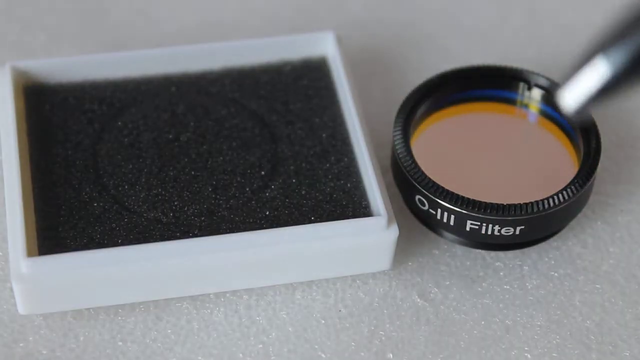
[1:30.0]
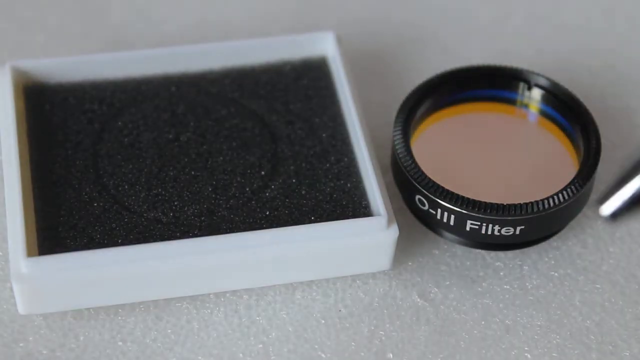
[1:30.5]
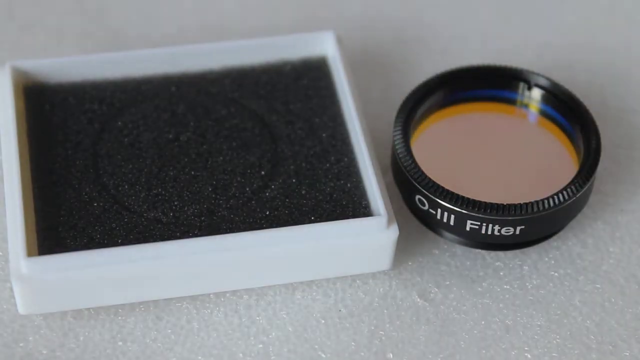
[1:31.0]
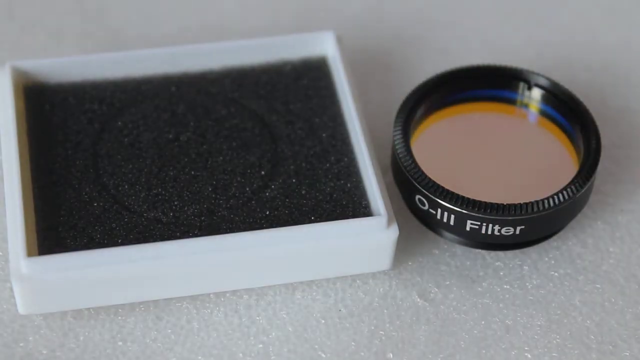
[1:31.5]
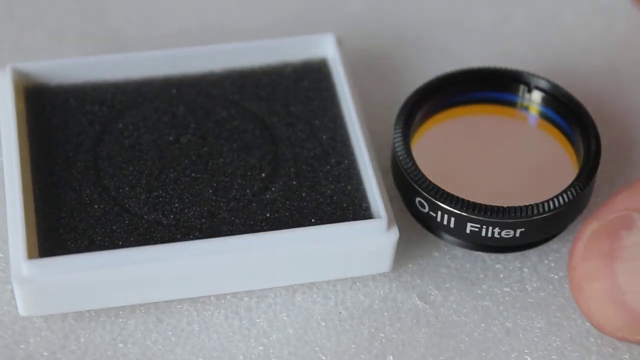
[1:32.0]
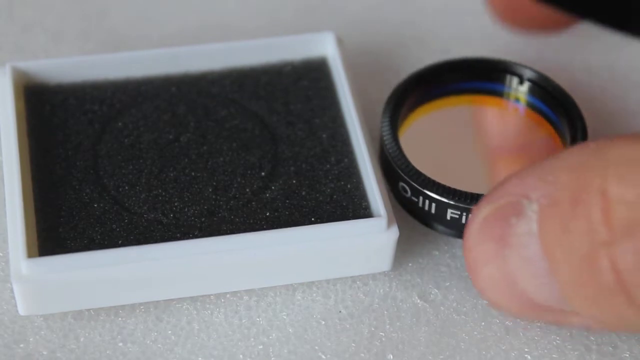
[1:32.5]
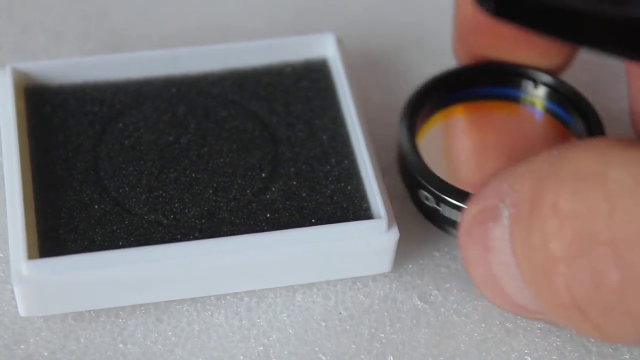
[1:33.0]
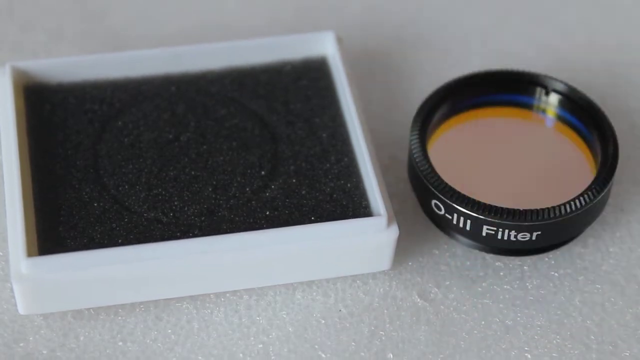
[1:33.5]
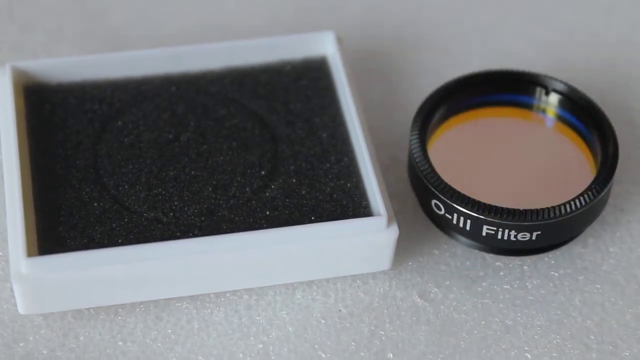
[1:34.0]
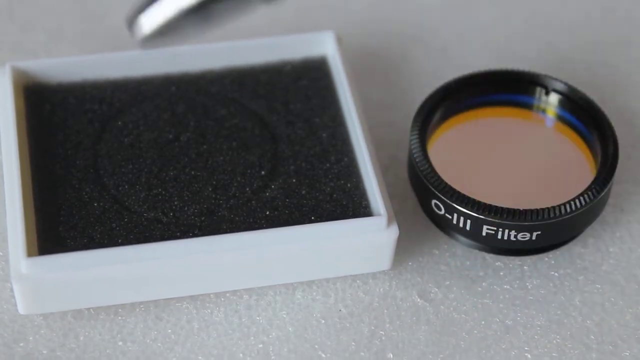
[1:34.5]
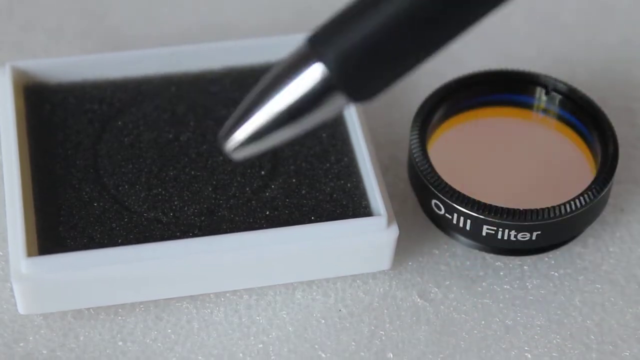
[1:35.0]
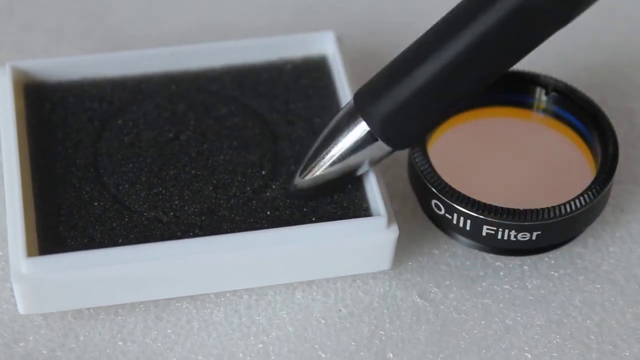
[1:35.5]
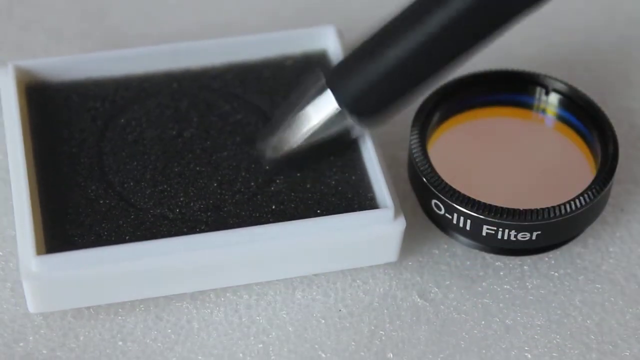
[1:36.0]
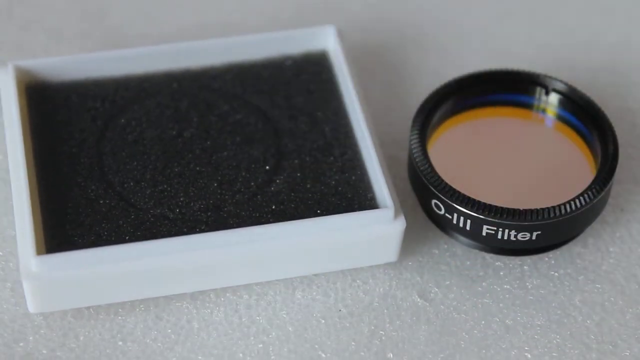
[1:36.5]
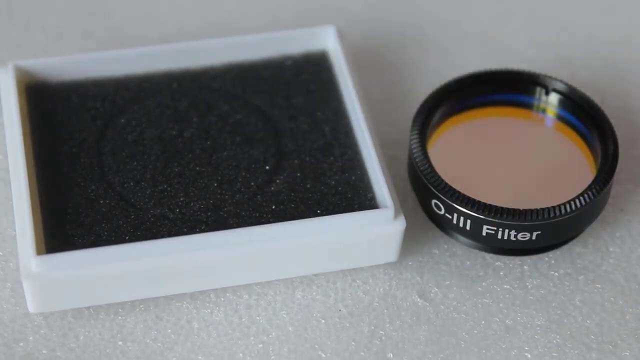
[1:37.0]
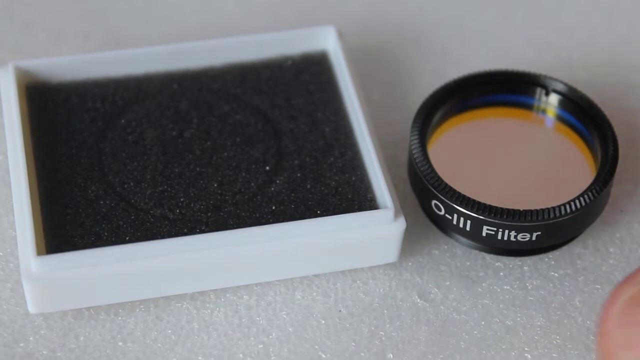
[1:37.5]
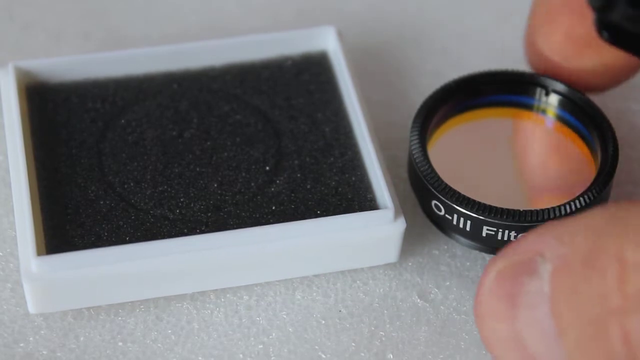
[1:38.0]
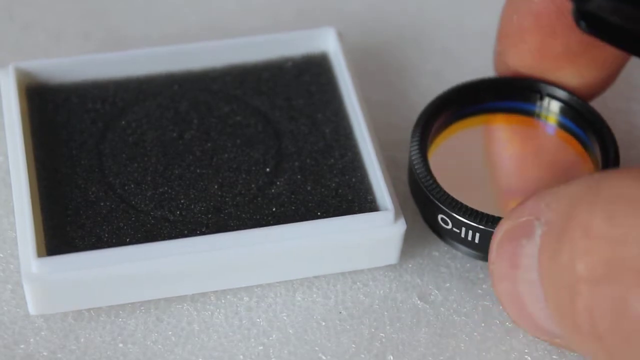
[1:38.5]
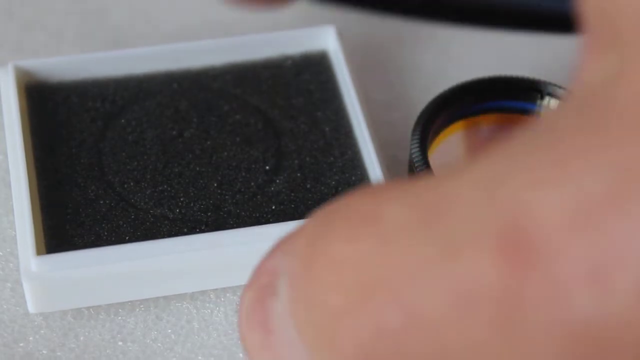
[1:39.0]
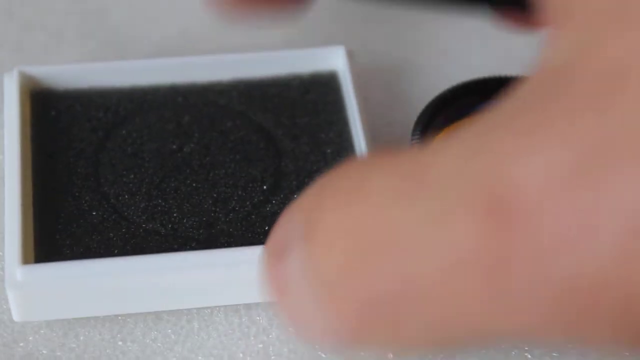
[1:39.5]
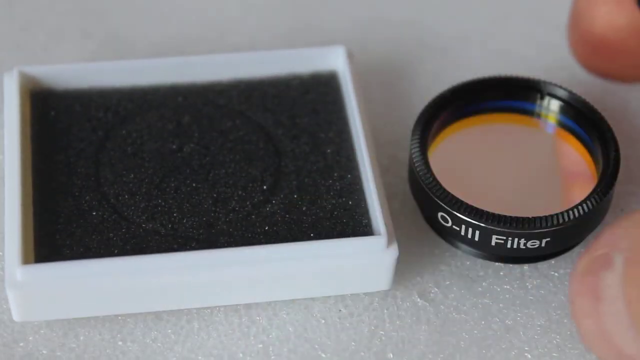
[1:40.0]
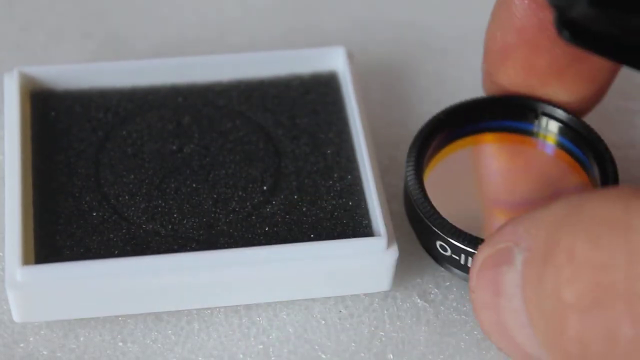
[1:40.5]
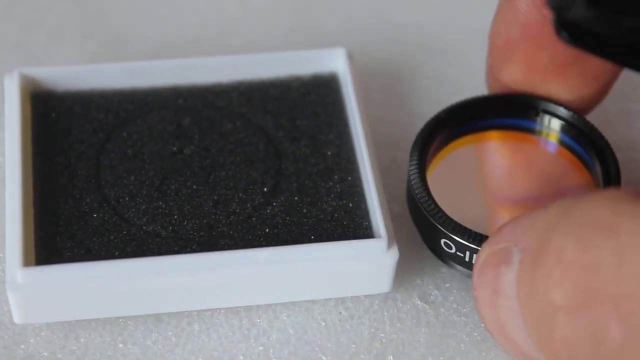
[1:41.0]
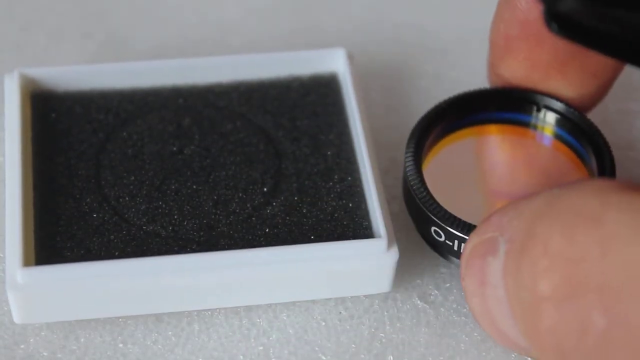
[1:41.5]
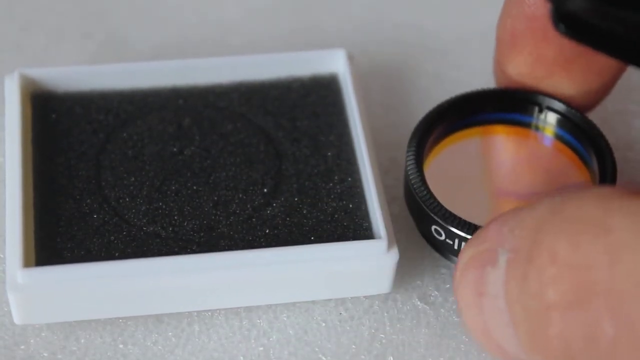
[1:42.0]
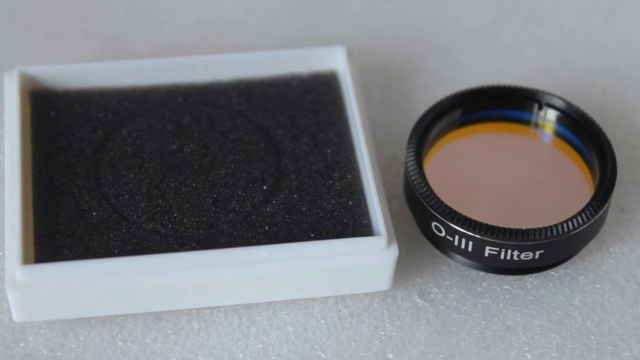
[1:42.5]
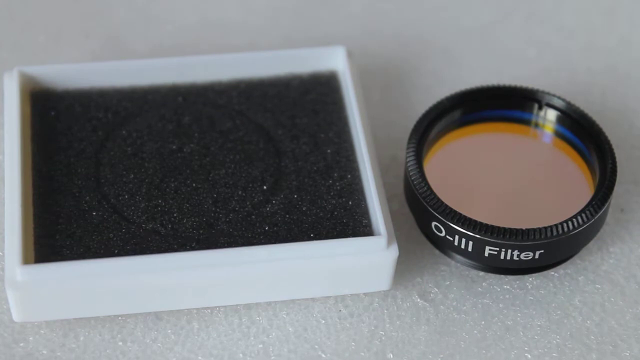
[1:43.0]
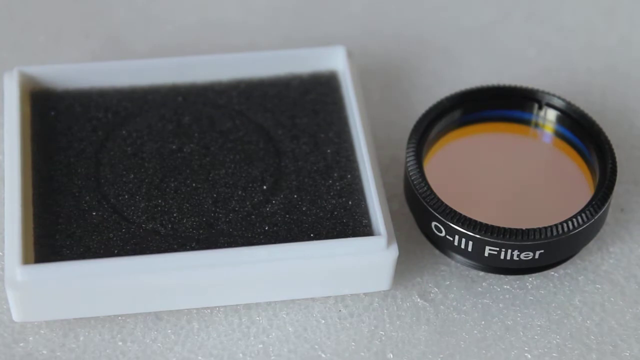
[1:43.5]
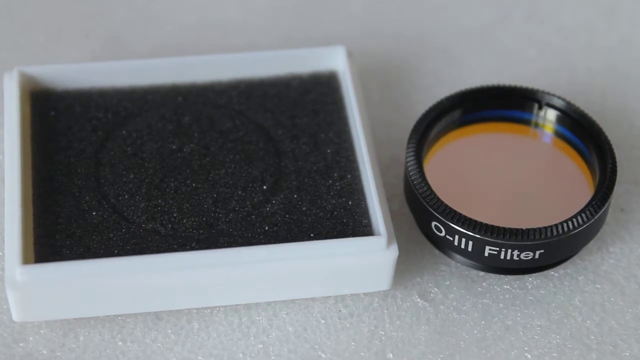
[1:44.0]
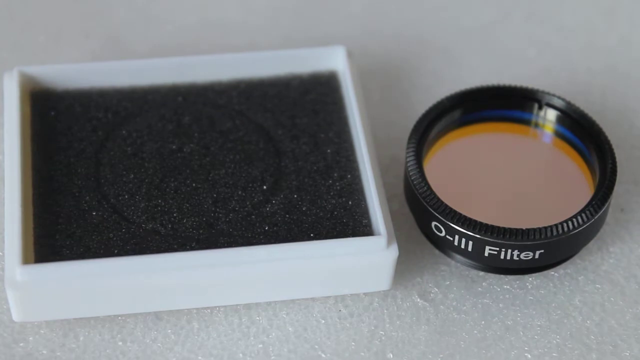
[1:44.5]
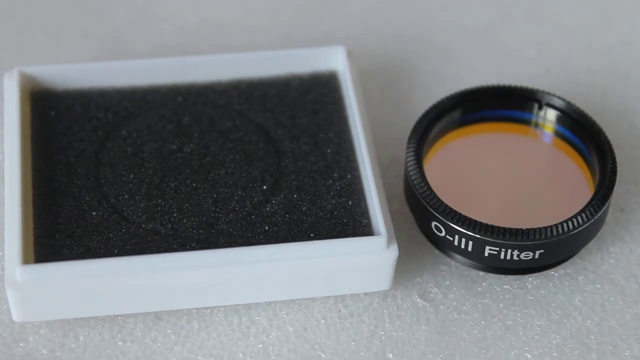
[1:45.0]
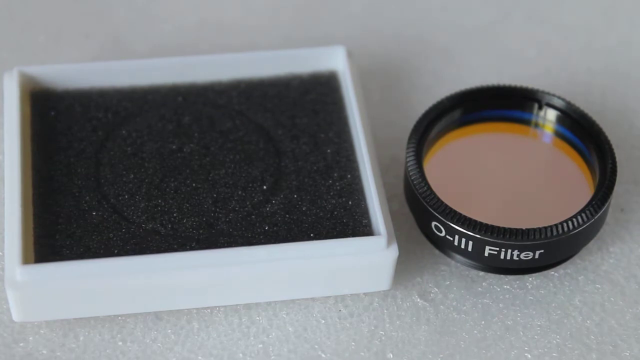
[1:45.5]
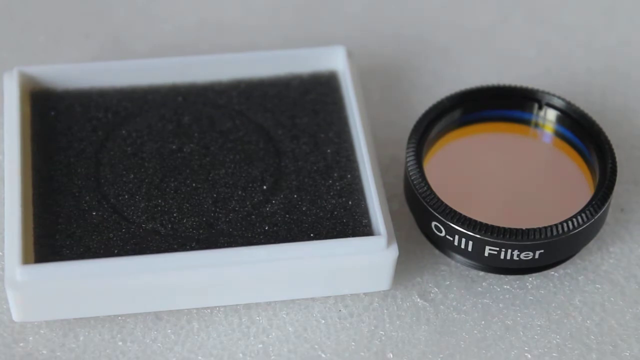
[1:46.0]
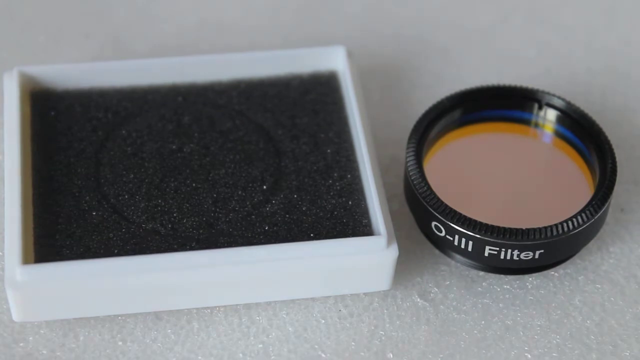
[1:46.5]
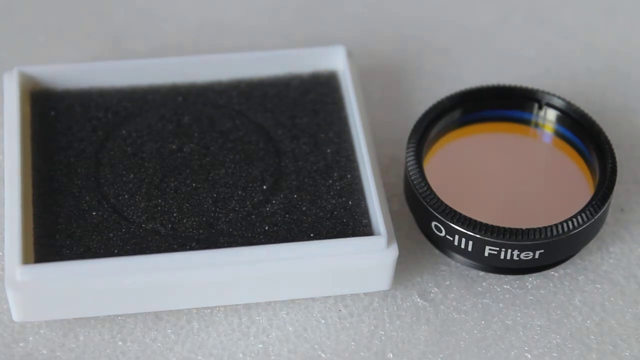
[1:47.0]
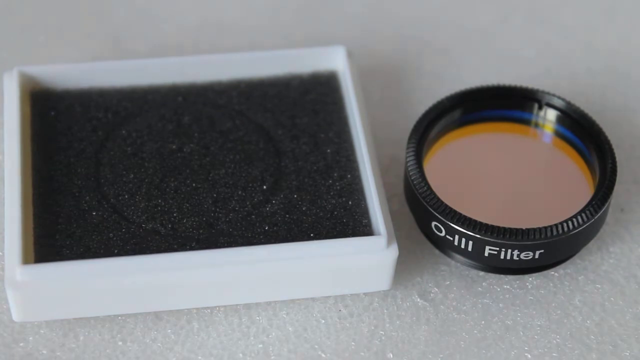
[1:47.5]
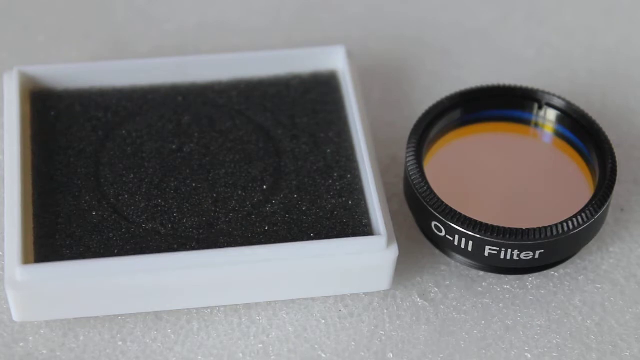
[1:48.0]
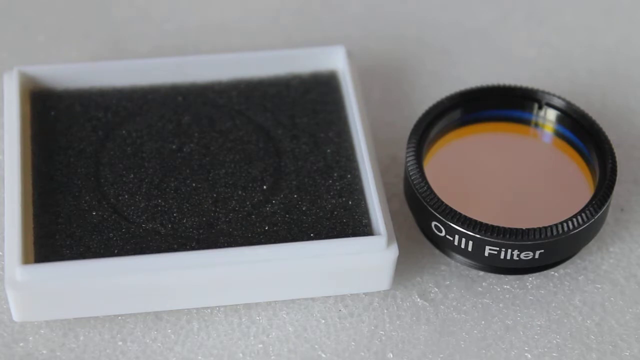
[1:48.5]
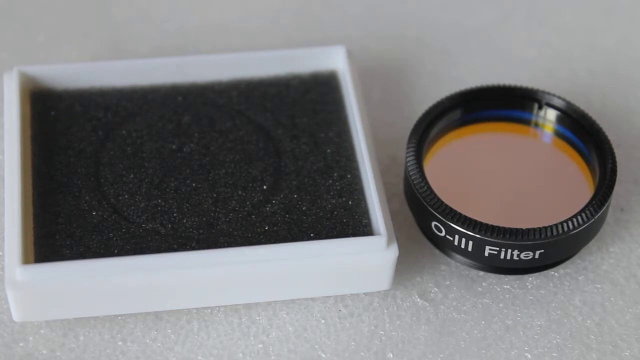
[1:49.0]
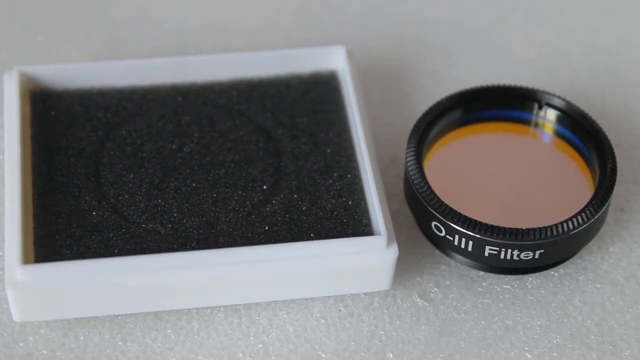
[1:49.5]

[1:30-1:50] The two objects are shown placed right next to each other. On the left is the black square with what looks to be black plastic foam inside, also square in shape. Next to it is the round object, which looks to be a magnifying glass of some sort; it has ridges on the side, is black on the exterior, and has "O-L-L-L filter" on its side in white. The person moves the round object slightly, then points the pen they are holding toward the white square. They continue making small adjustments, moving the square object and the round object slightly. The setting is indoors, with a good amount of natural light making everything clear and visible. The video is rectangular in shape.